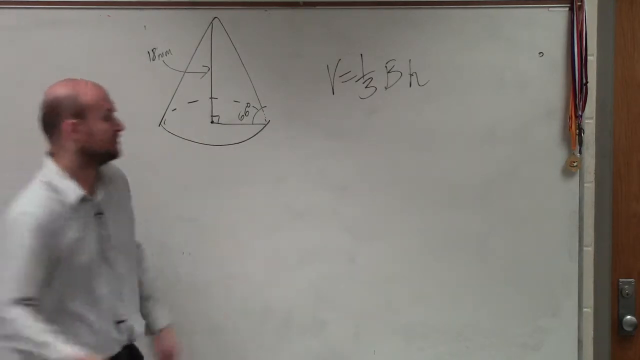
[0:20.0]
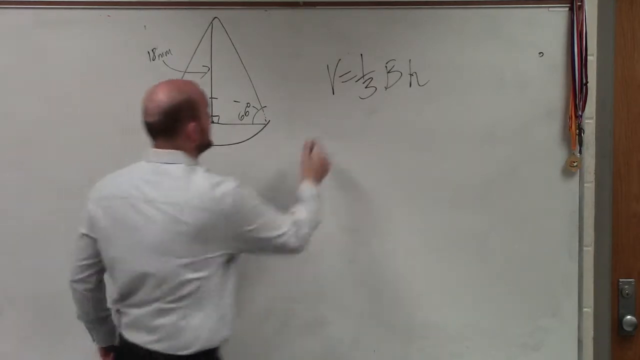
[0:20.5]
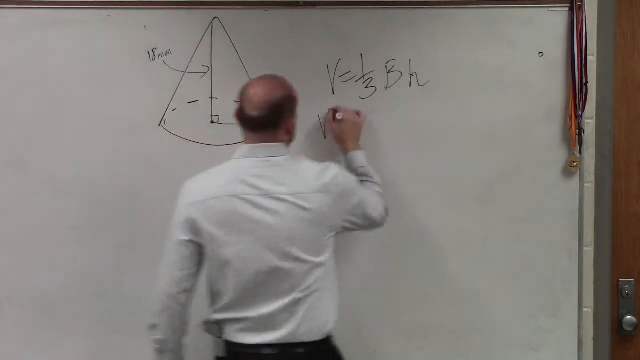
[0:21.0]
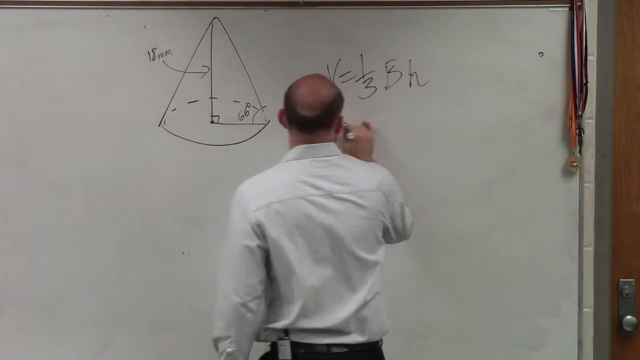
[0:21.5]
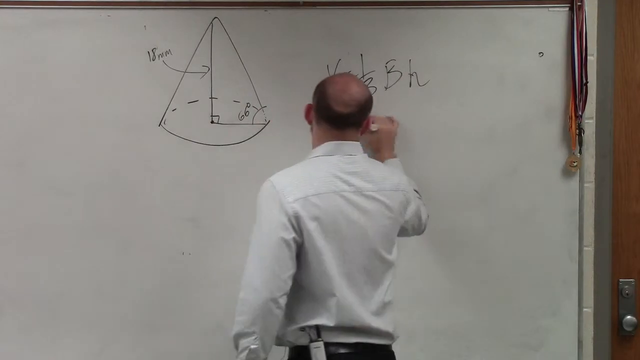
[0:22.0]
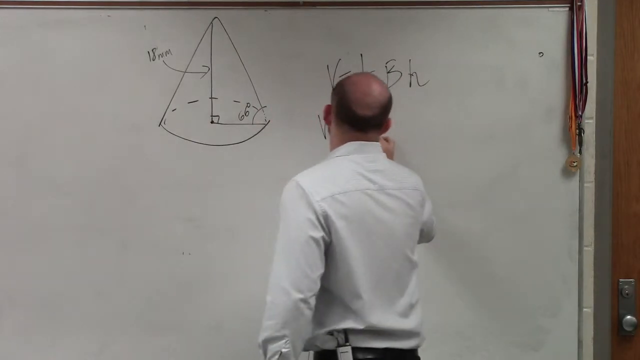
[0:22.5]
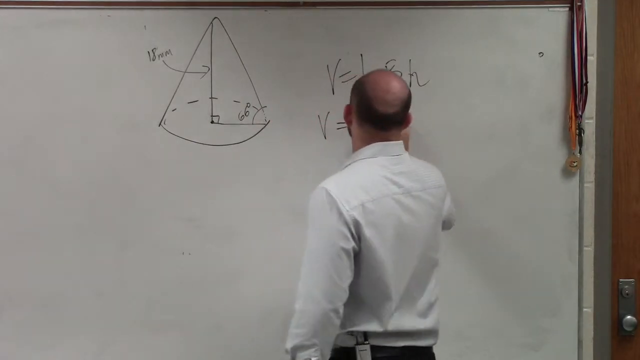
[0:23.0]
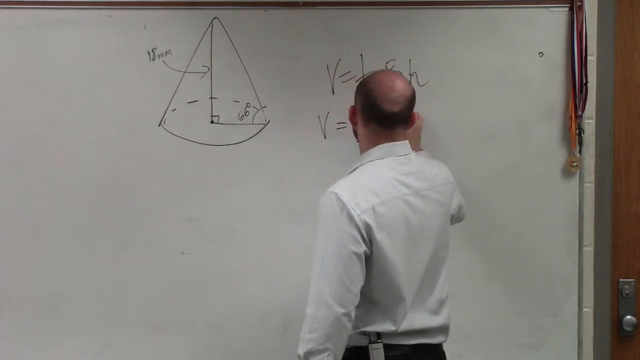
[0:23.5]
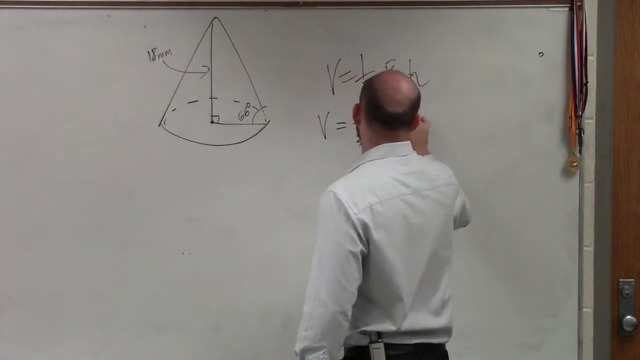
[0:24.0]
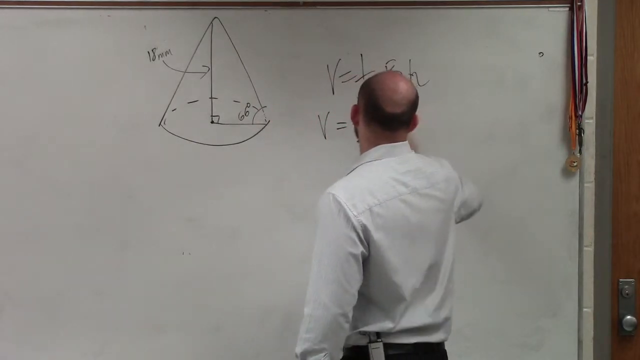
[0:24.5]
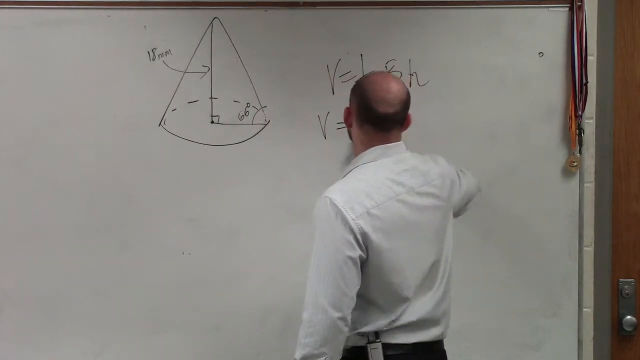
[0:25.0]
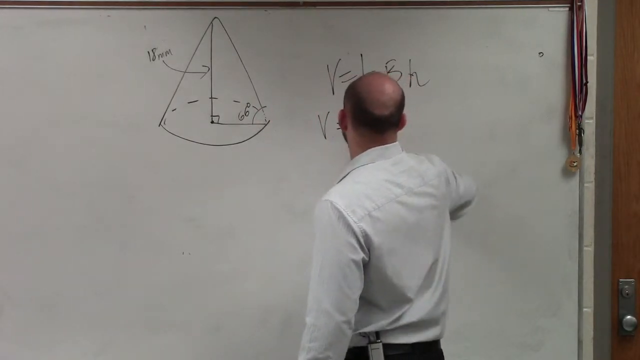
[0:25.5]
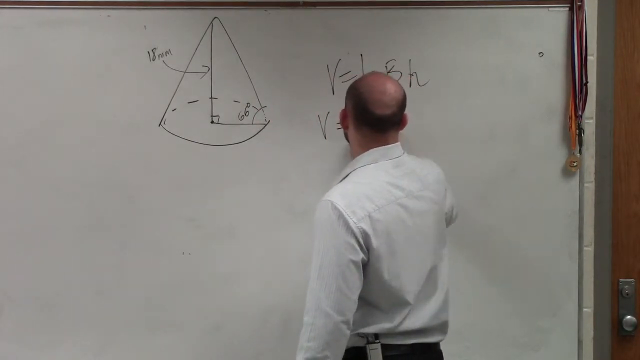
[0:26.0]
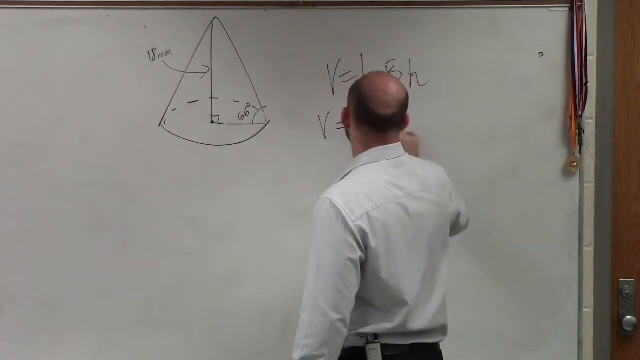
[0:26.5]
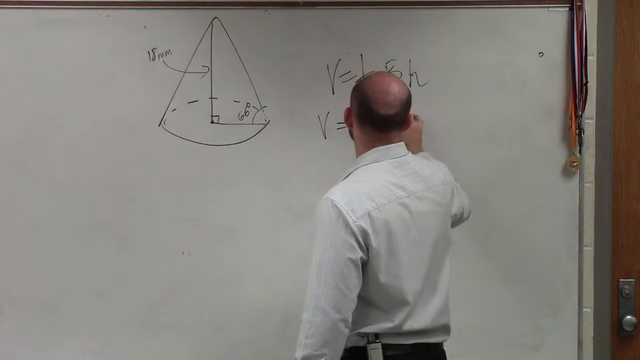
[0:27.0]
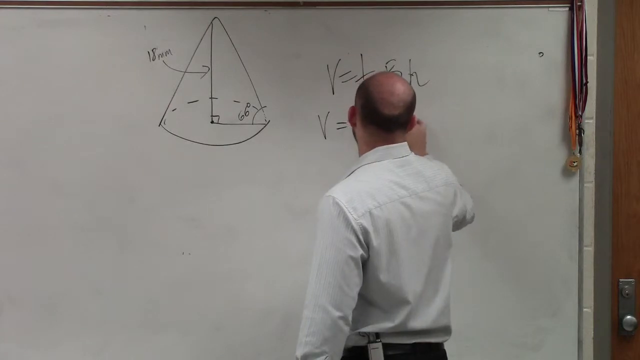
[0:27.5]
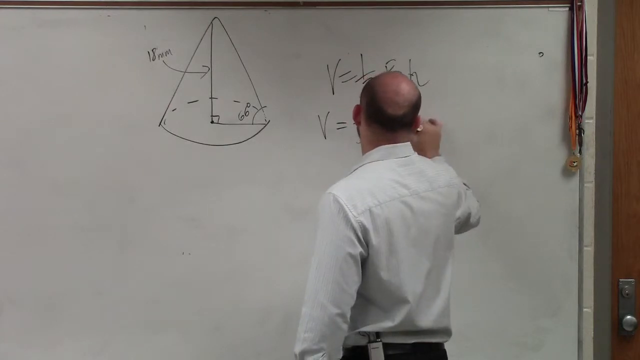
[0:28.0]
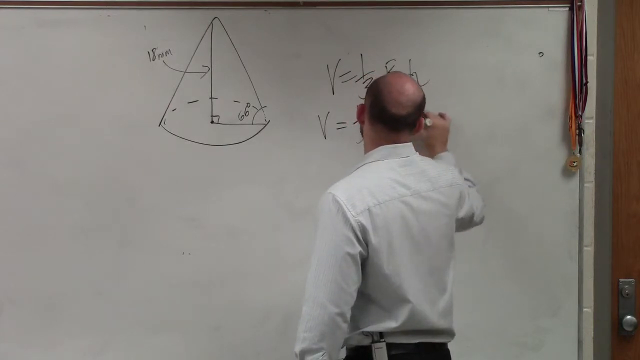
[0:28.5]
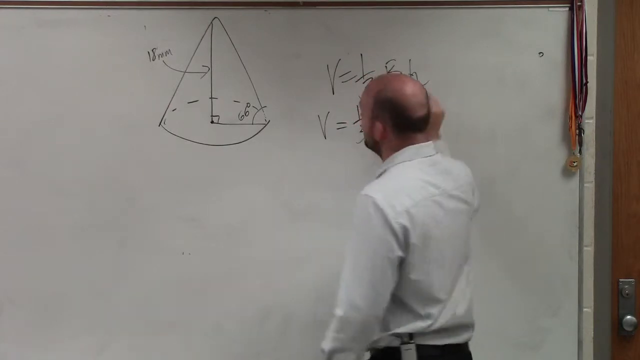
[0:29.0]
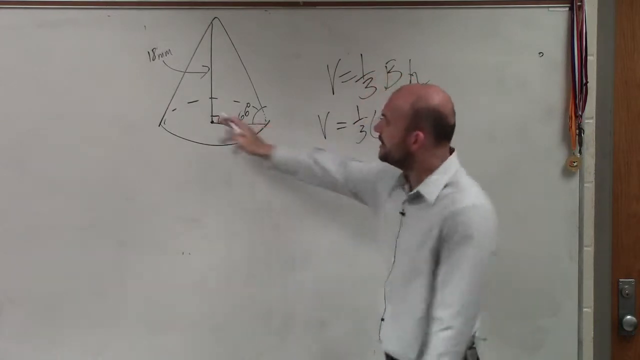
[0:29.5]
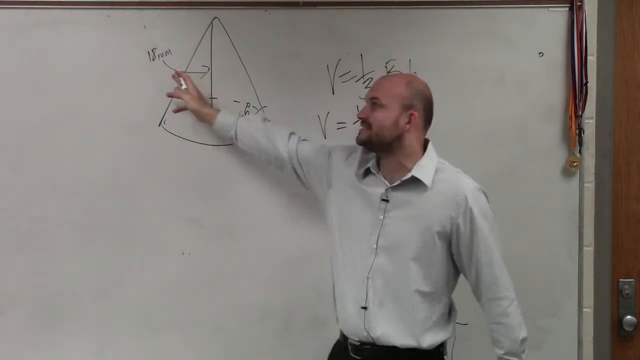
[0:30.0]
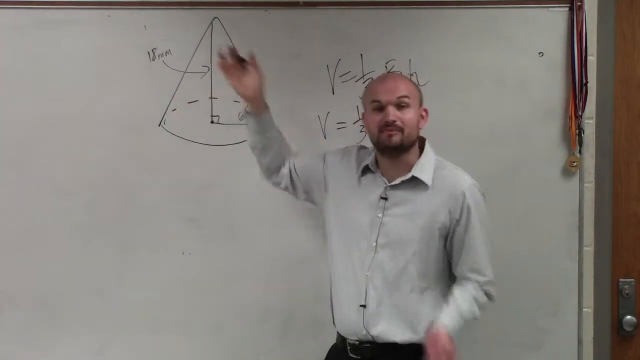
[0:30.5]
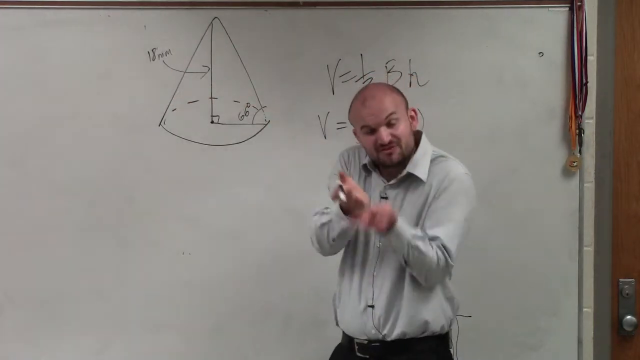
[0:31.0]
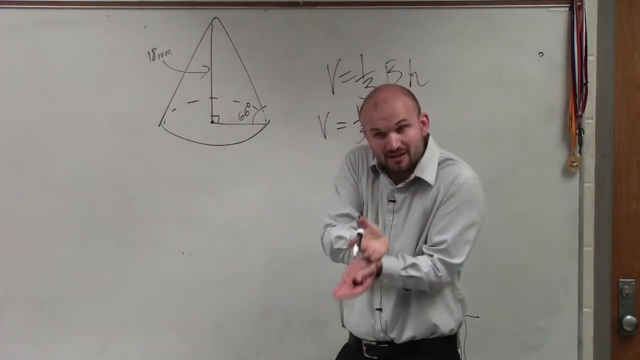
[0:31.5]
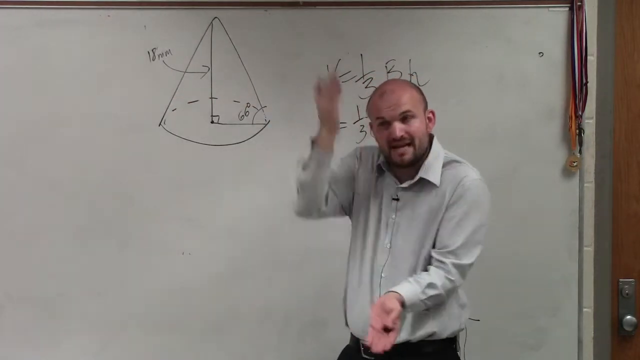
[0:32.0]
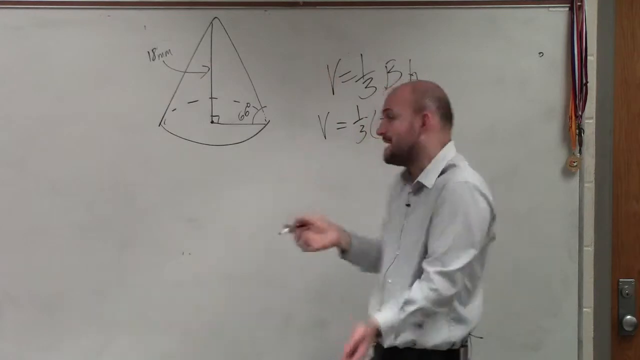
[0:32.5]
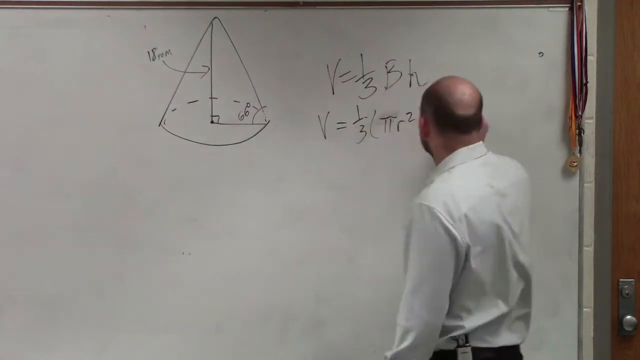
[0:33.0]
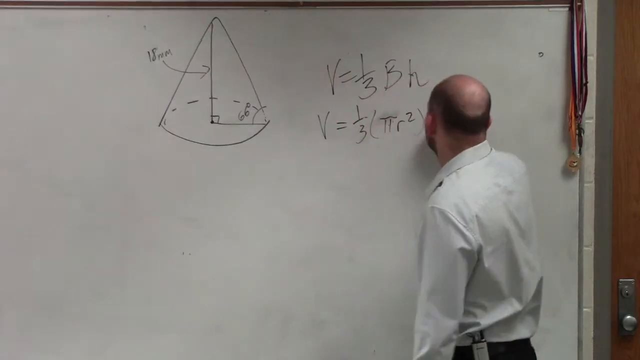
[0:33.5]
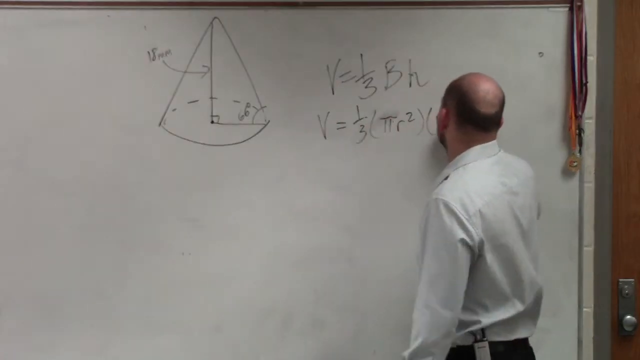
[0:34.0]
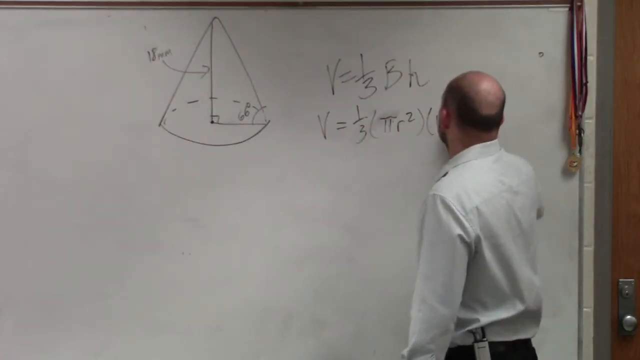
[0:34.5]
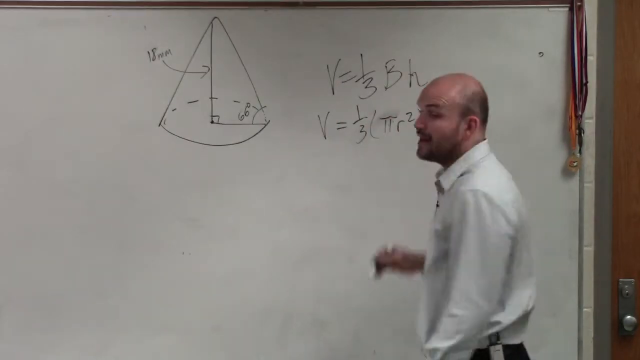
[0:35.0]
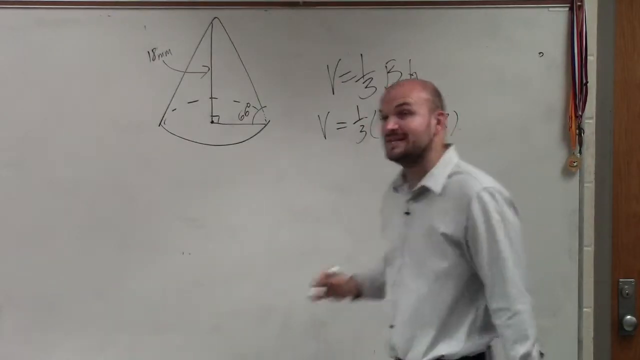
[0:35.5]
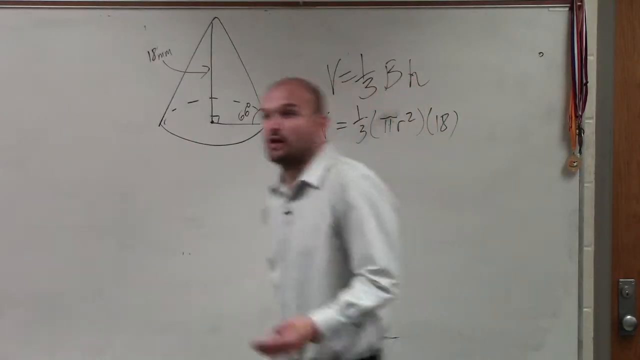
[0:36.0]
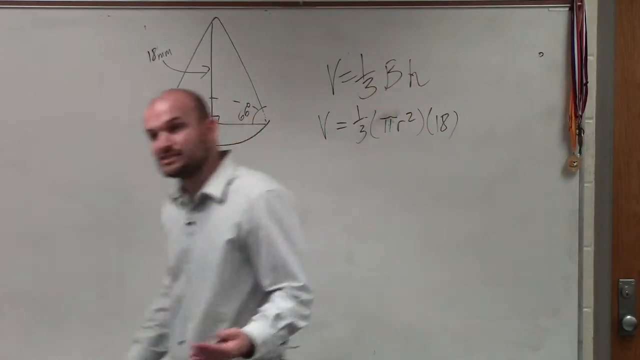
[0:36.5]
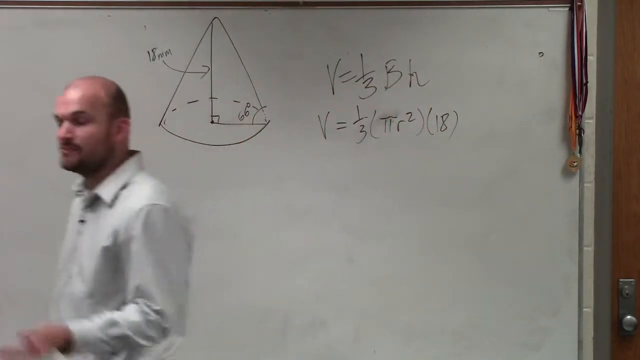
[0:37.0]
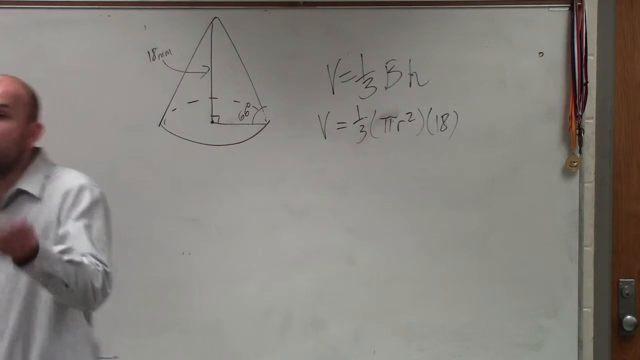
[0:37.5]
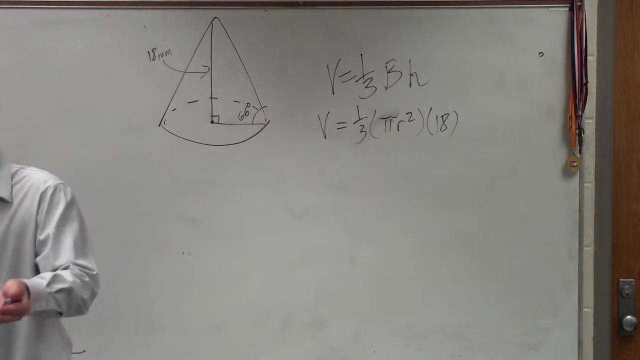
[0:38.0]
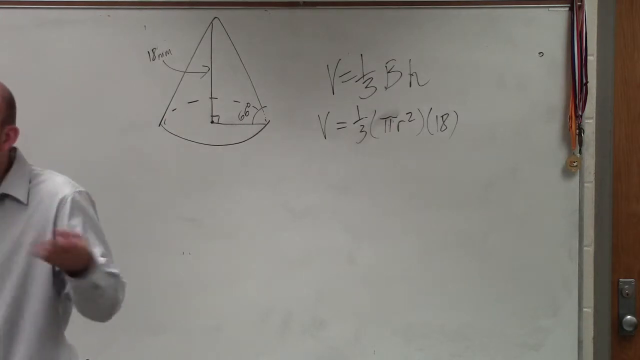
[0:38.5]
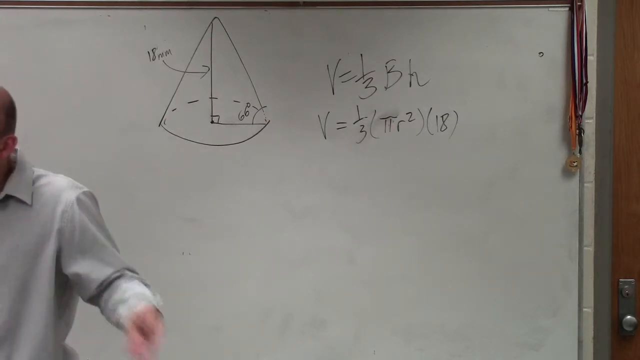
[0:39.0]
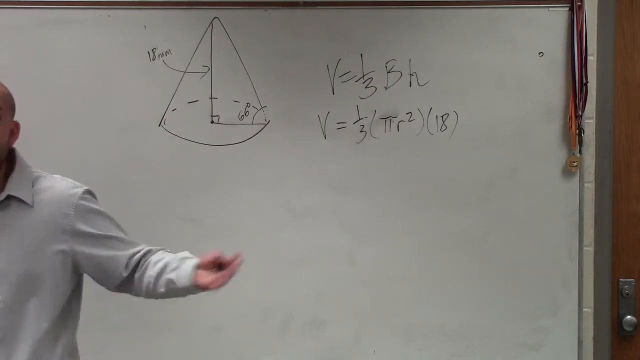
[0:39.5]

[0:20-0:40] With his back to the class, the teacher writes on the whiteboard: V equals one-third (pi r squared)(18). From behind, he is seen wearing a white, collared, button-up dress shirt. When he turns around, a microphone is visible, and its battery pack is clipped onto his belt. He wears a brown belt with a silver buckle and what appear to be dark pants that look black, and the back of his head shows that he is balding. He writes on the whiteboard and gestures to the cone-shaped diagram he has drawn. He turns to face the room; the classroom itself is not visible, but he faces where the students would be sitting and gestures toward them with both hands, moving his hands a lot as he speaks. He then brings his hands together in a gesture toward what he has just written on the board.